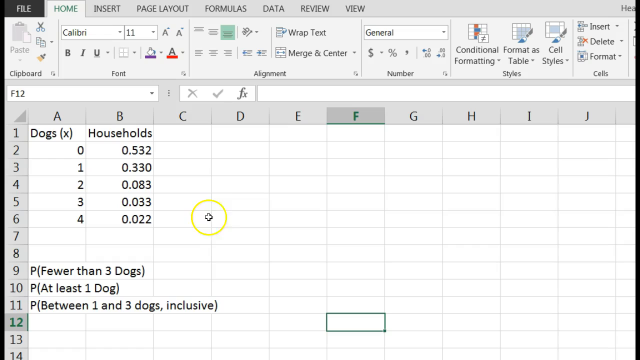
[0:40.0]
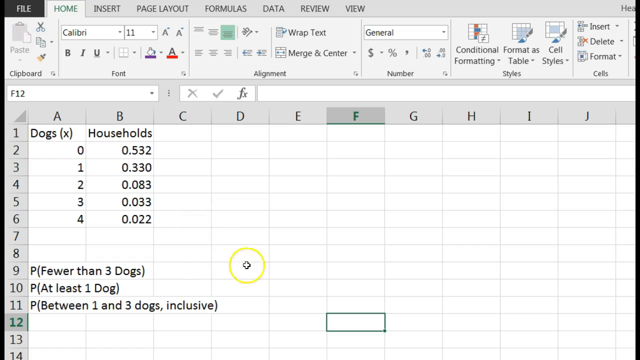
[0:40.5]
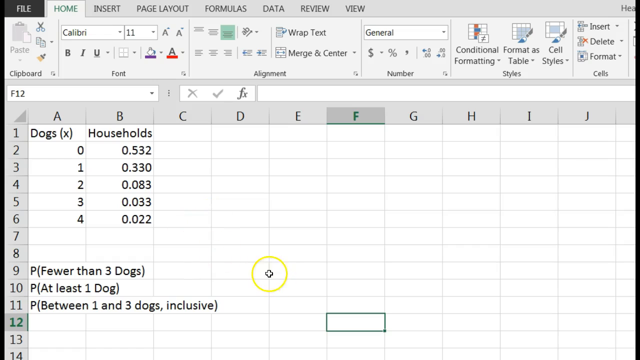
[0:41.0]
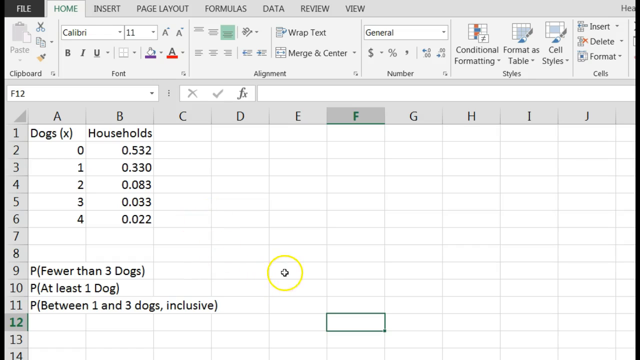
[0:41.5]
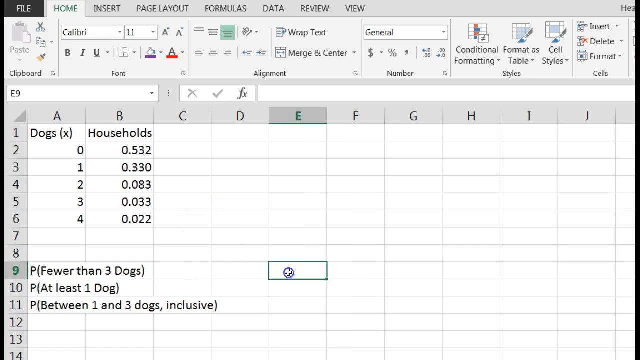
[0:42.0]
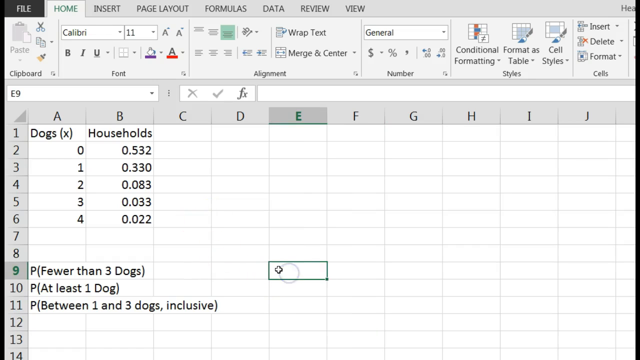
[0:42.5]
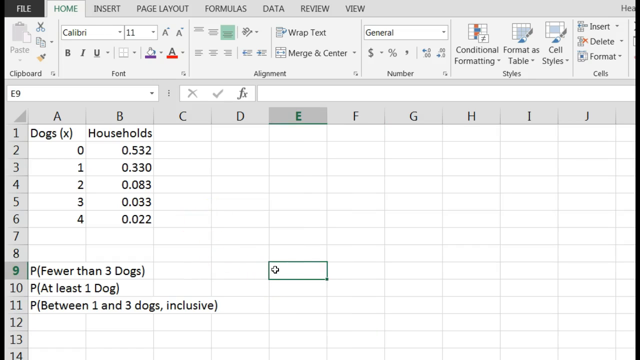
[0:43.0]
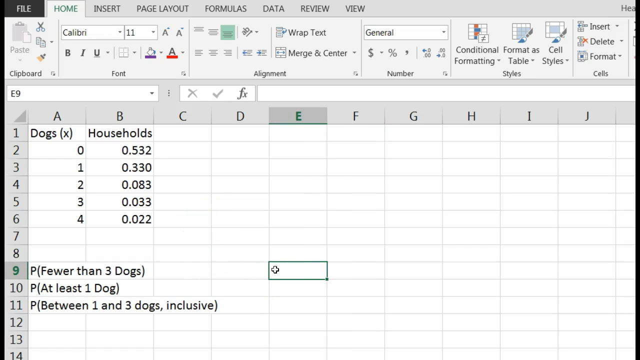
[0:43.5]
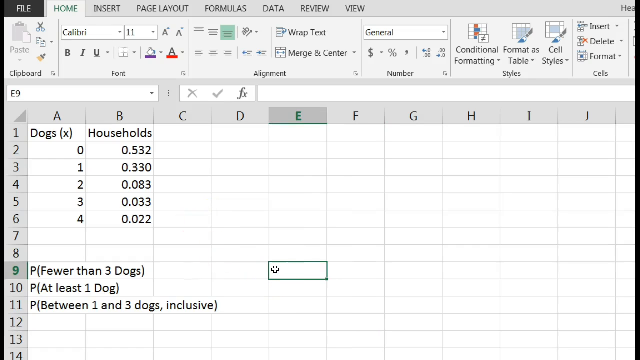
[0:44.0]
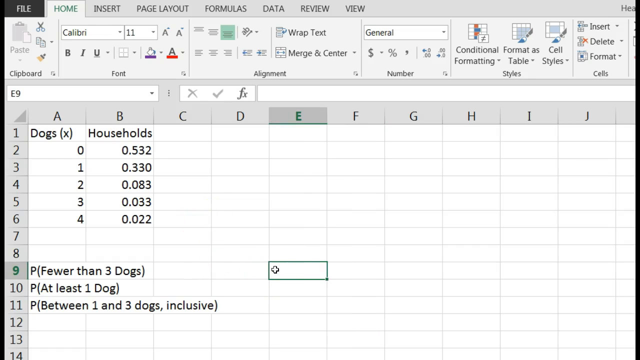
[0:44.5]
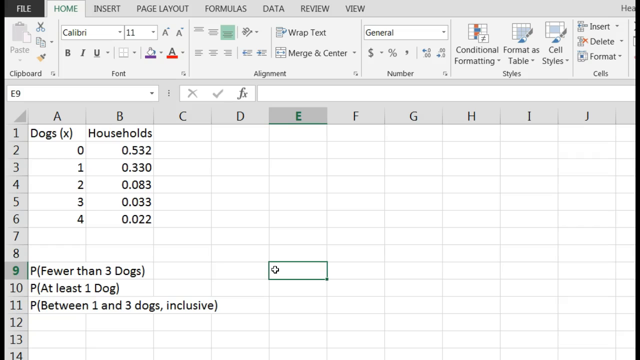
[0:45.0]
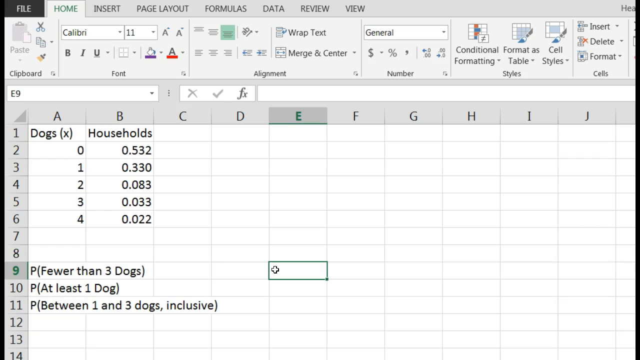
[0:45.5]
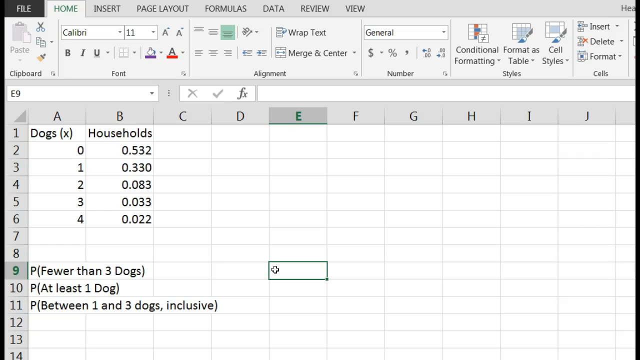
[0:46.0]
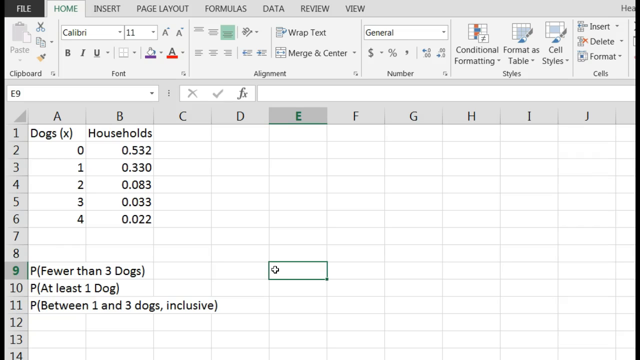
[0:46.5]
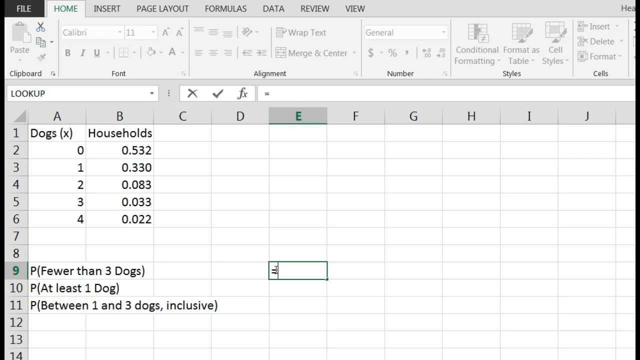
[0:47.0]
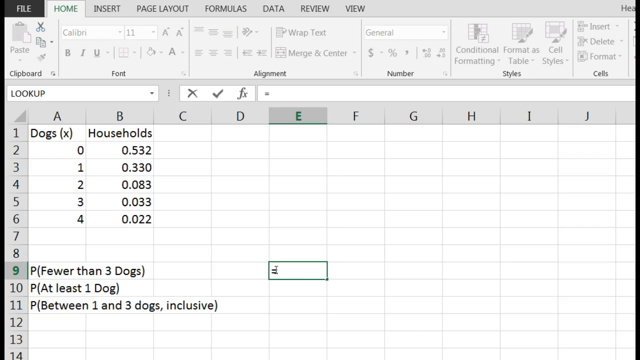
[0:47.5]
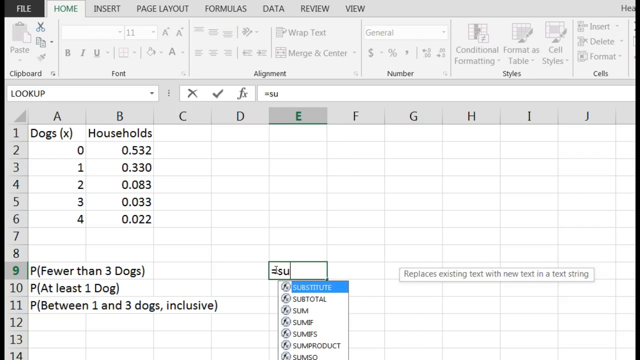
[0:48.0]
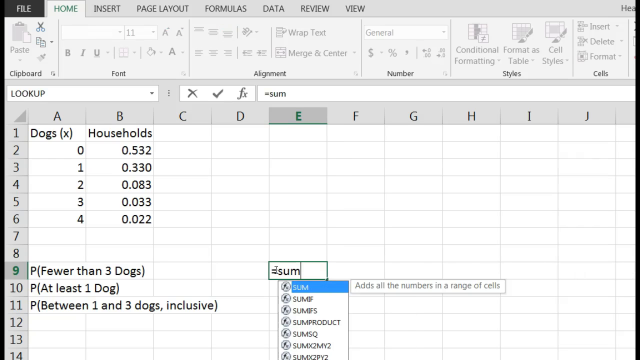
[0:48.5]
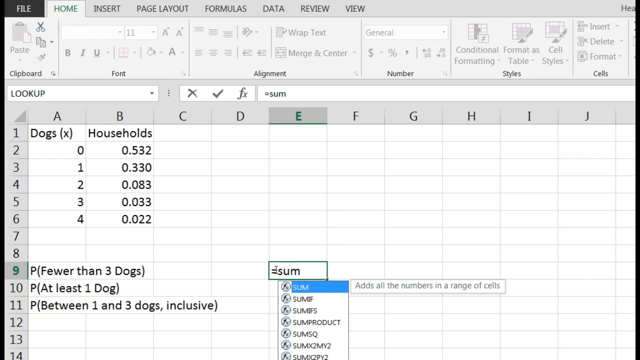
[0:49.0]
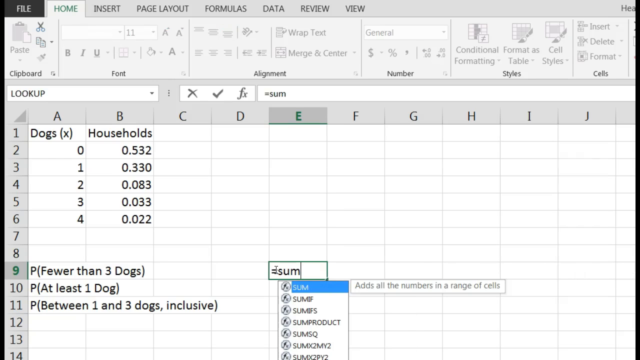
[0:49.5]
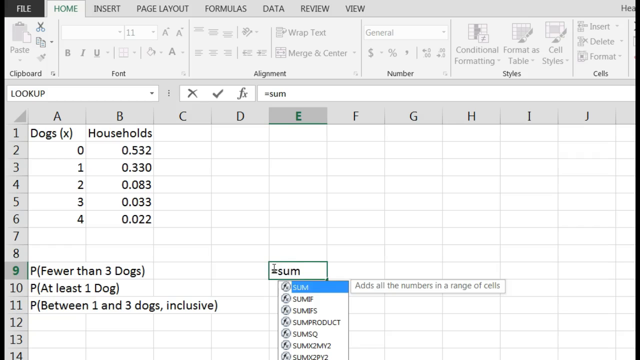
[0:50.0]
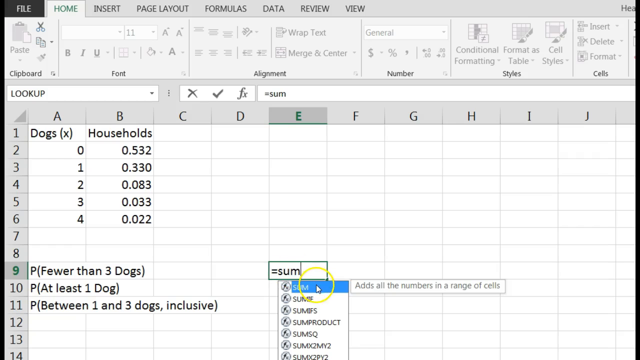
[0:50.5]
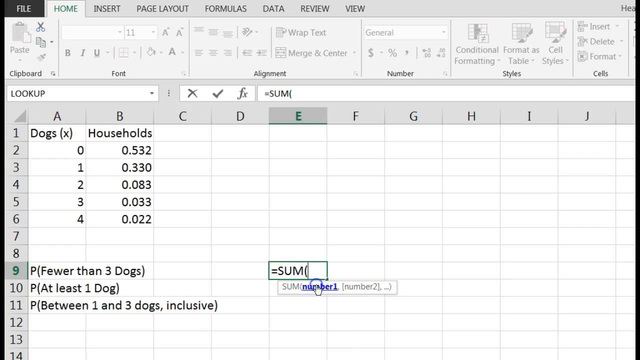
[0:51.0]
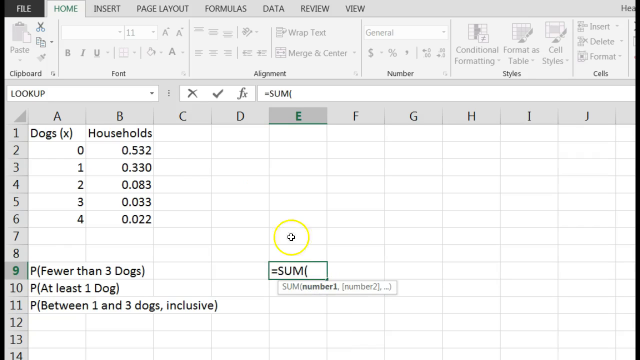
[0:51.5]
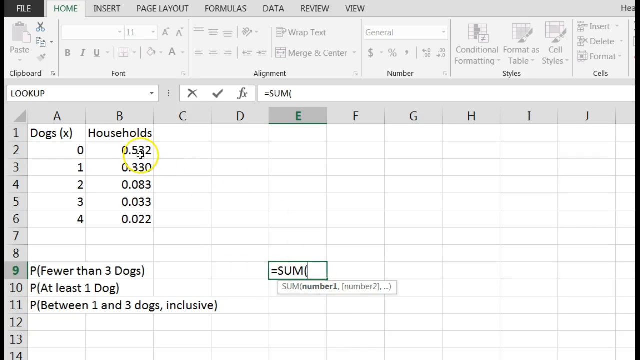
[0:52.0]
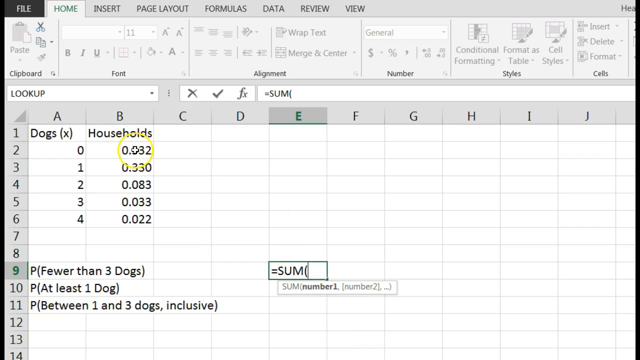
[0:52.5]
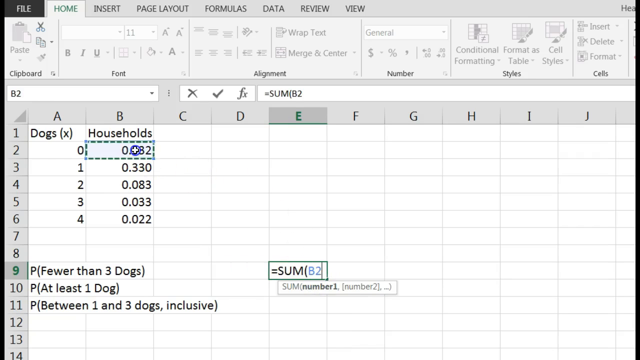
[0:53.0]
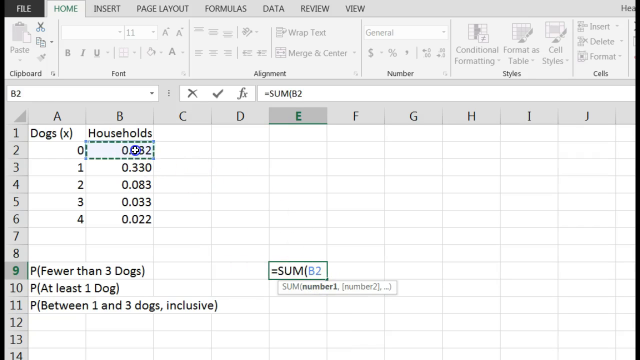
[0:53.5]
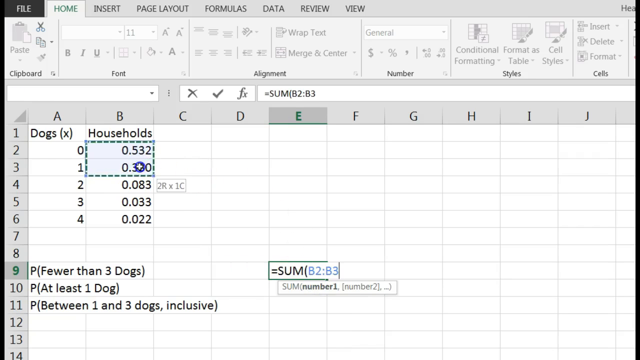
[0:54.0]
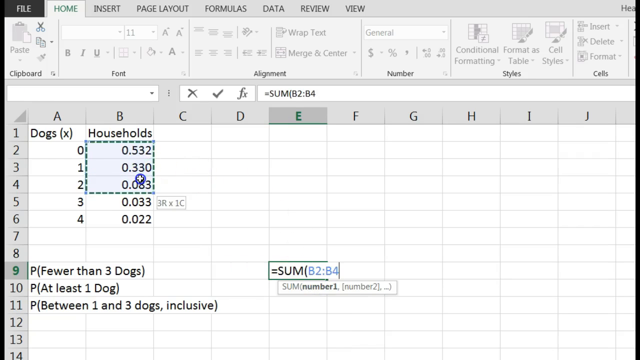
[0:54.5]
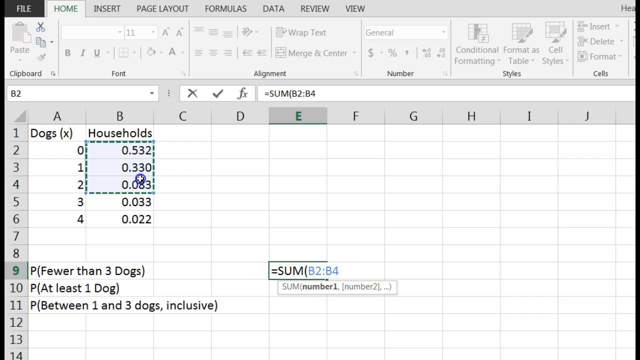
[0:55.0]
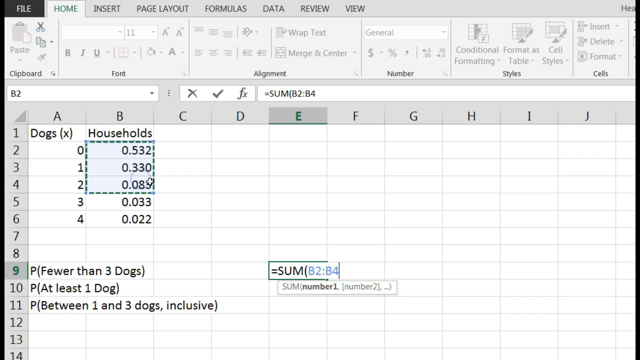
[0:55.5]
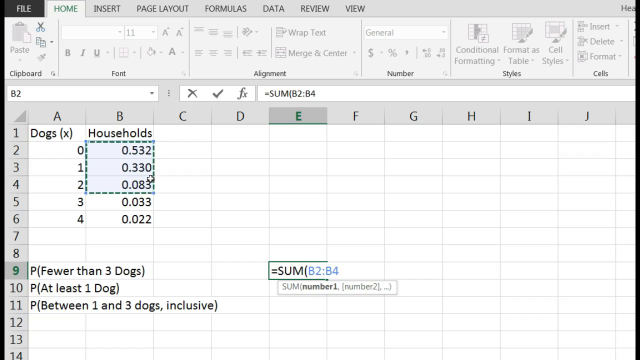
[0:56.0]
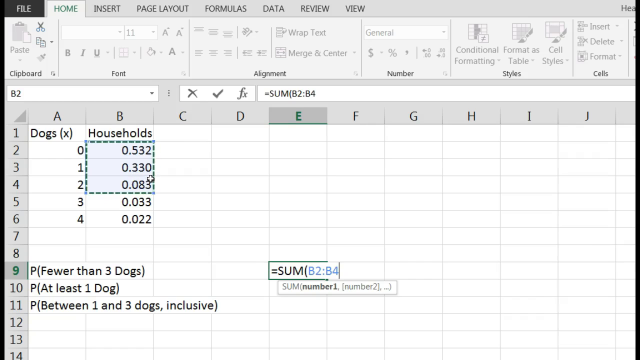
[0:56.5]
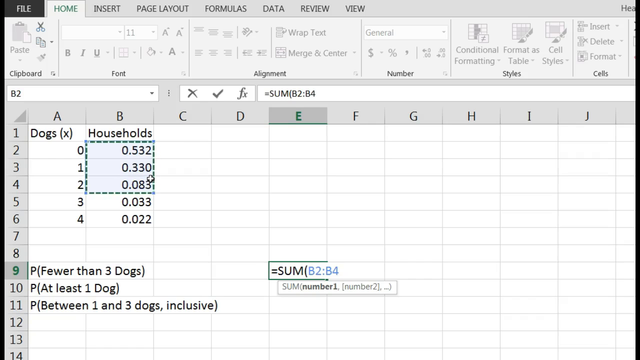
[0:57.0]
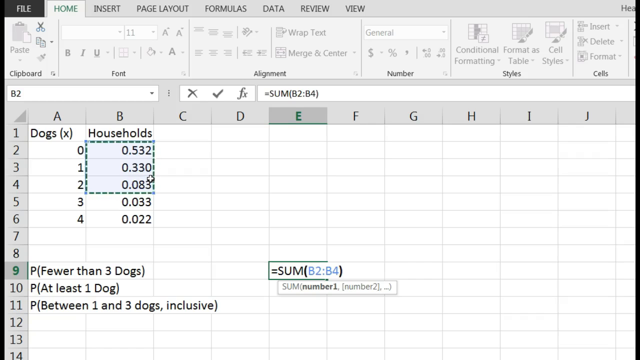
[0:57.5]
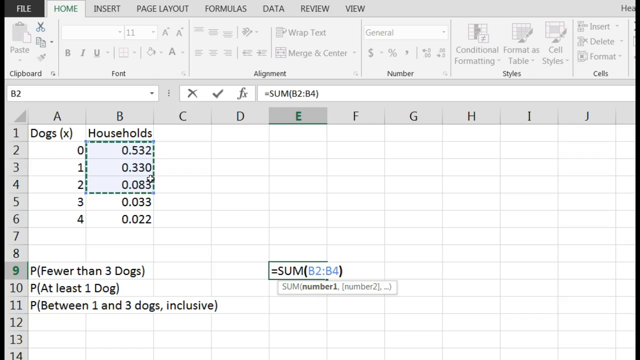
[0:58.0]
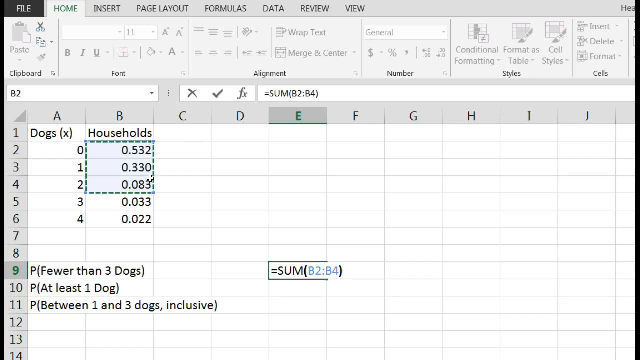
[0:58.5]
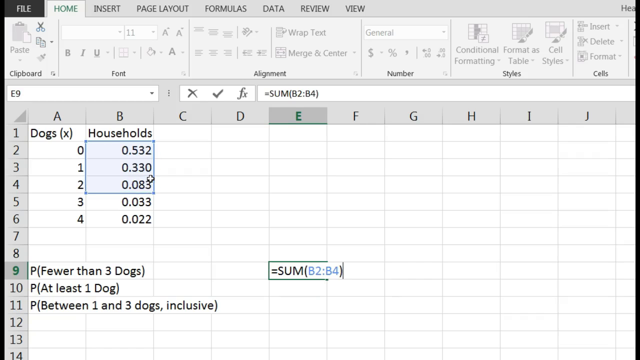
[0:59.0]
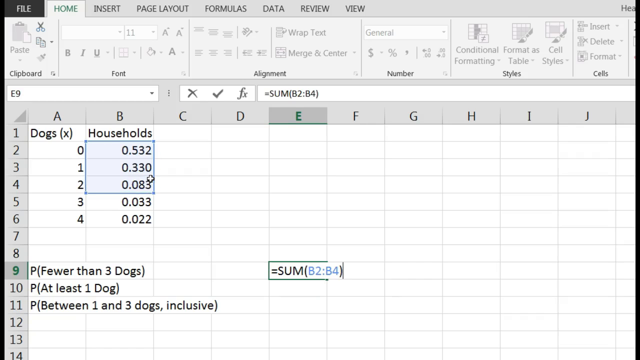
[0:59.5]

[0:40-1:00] The cursor moves left and right, then down a little, ending across from C9 and C10 or D10. The plus cursor clicks on E9, which gets a green border, with a little dot in the bottom right corner of the box. A function is typed into the cell: after "sum" is typed, a drop-down list appears with other sum functions, with the top option, SUM, highlighted in blue. A small caption to the right of the list gives more information, reading "all the numbers in a range of cells". The first sum is clicked, opening a parenthesis, and a hint shows number one, a comma, and number two in brackets. A click then puts B2 into the formula, and an animated dotted line runs around that cell. The cursor clicks and drags down to include B3 and B4, which are added to the function box.